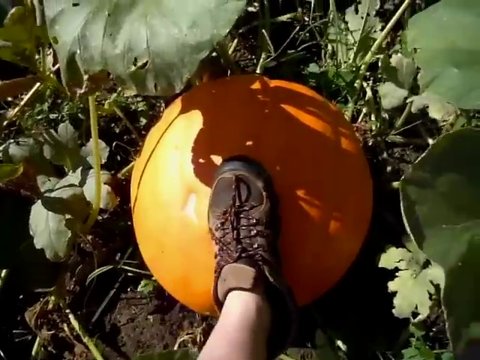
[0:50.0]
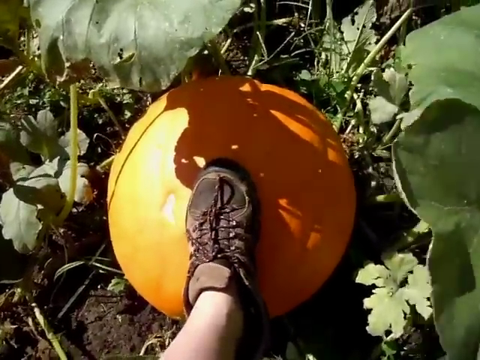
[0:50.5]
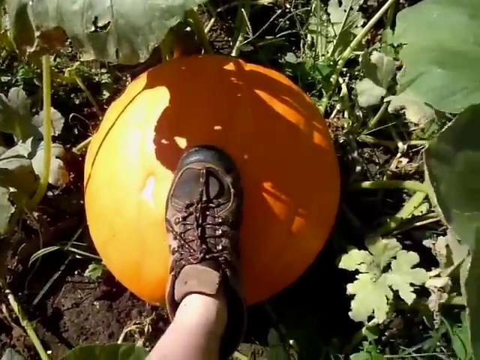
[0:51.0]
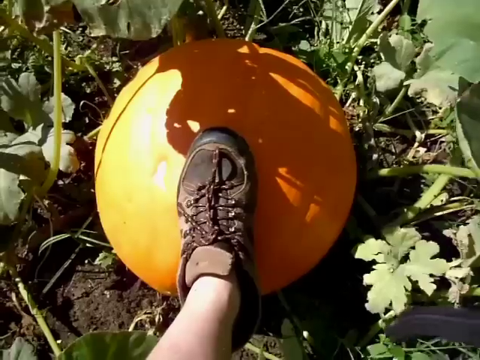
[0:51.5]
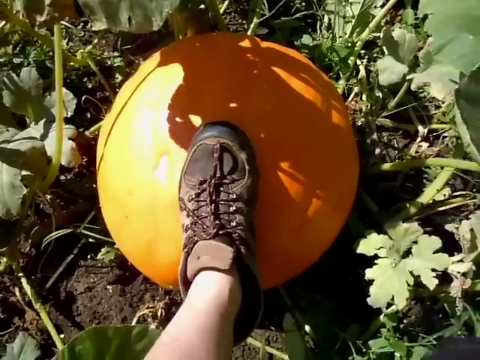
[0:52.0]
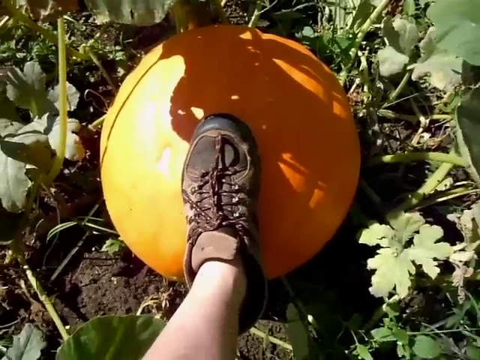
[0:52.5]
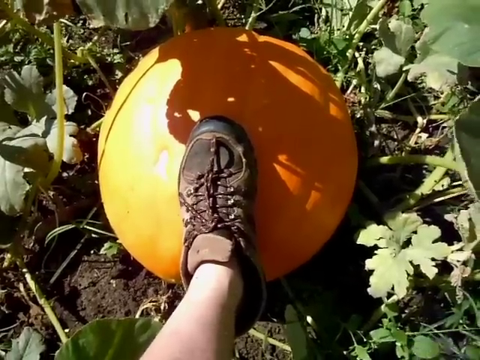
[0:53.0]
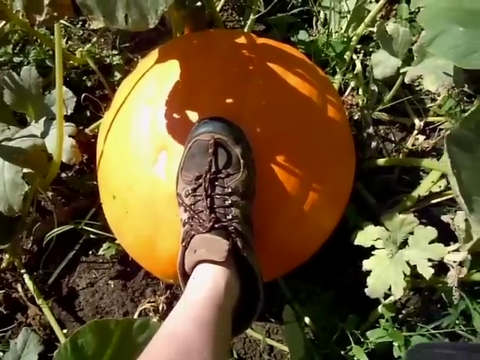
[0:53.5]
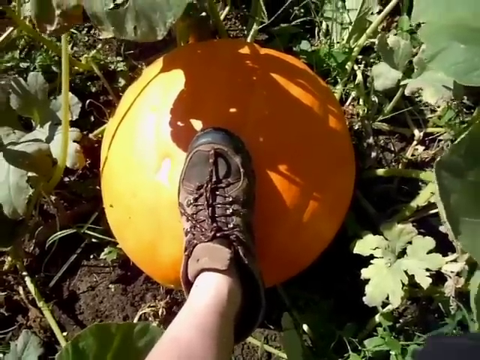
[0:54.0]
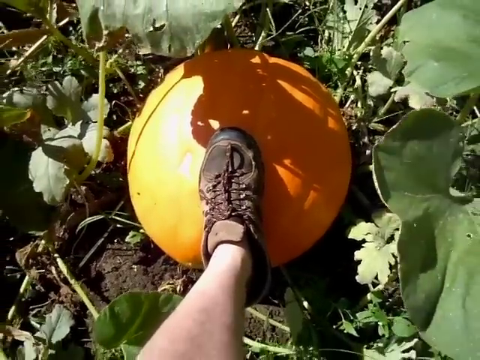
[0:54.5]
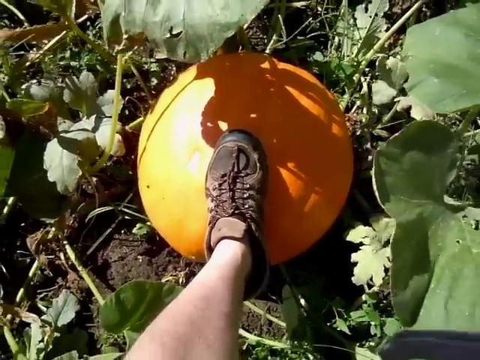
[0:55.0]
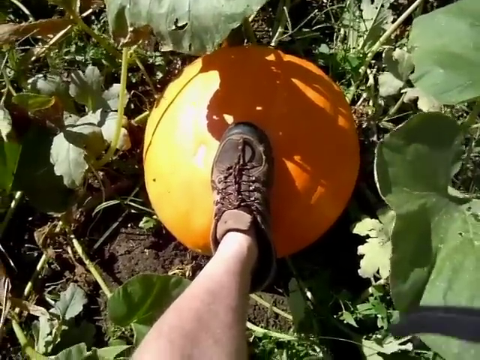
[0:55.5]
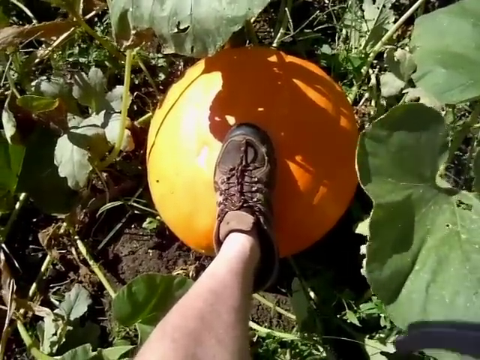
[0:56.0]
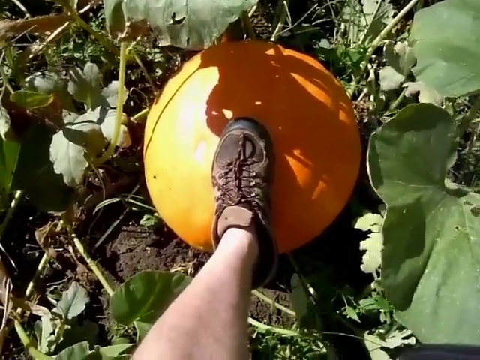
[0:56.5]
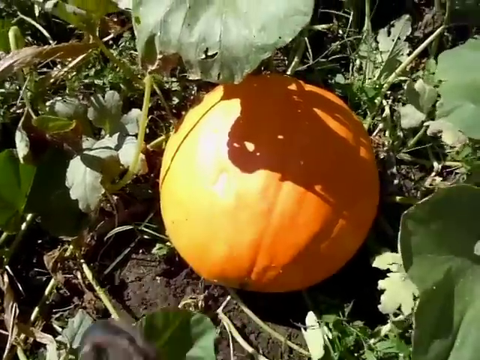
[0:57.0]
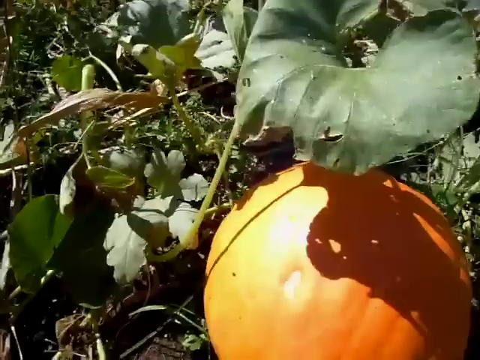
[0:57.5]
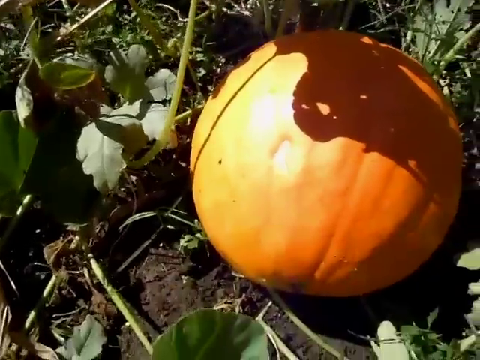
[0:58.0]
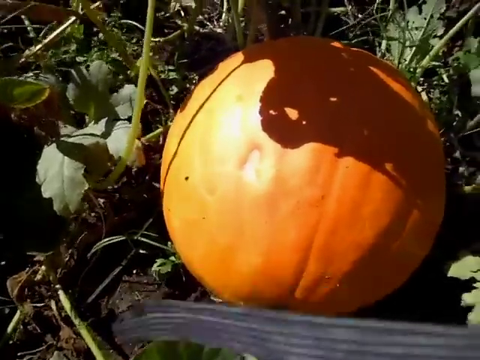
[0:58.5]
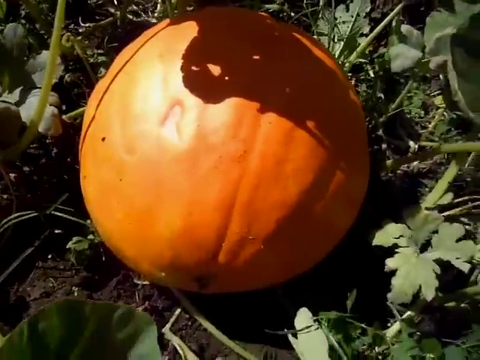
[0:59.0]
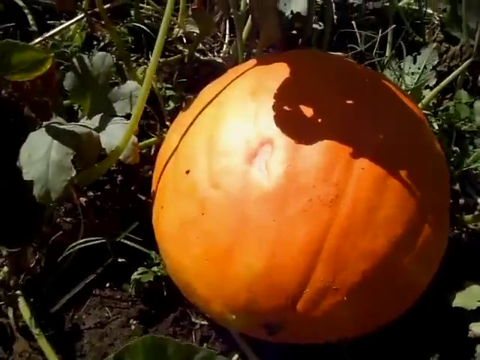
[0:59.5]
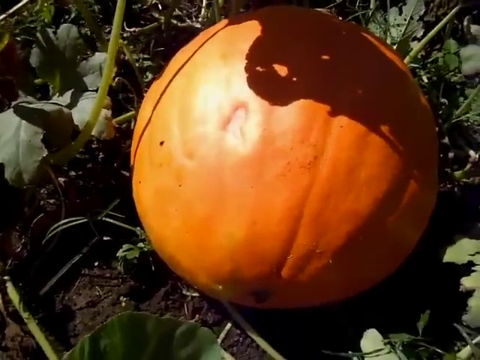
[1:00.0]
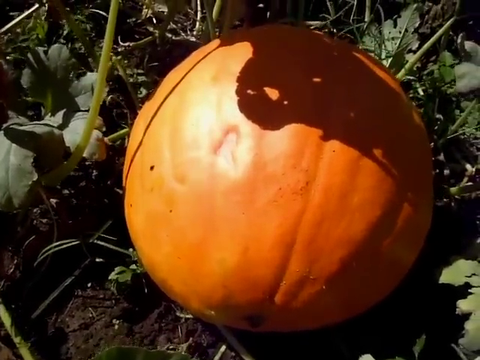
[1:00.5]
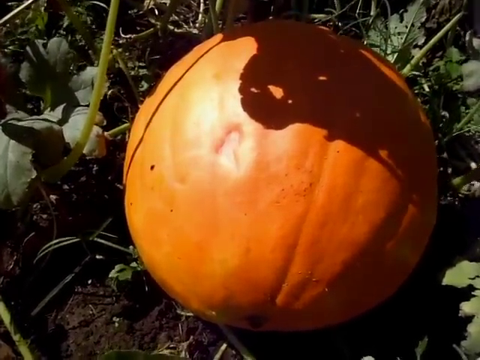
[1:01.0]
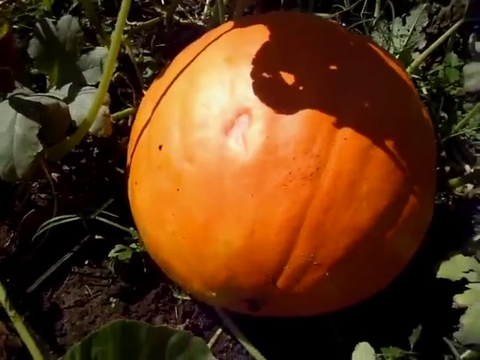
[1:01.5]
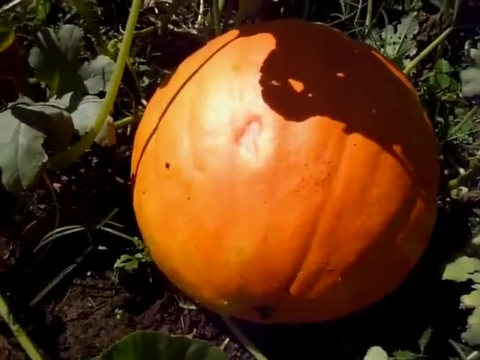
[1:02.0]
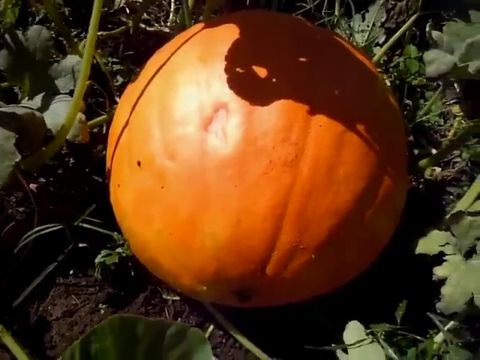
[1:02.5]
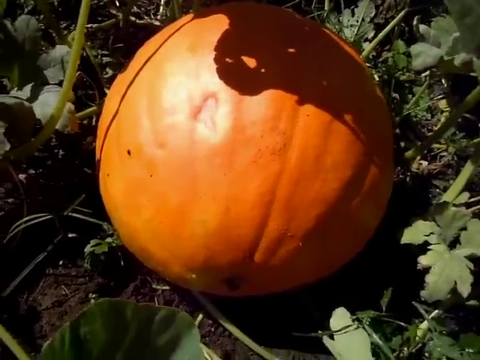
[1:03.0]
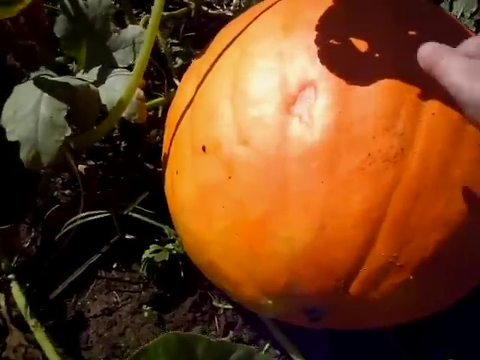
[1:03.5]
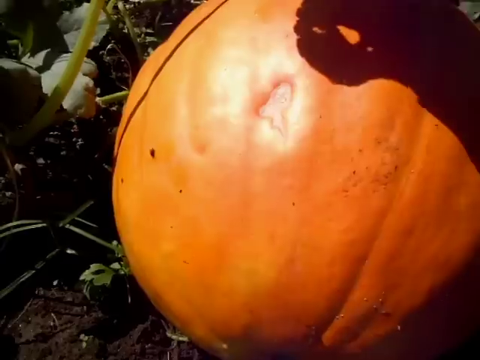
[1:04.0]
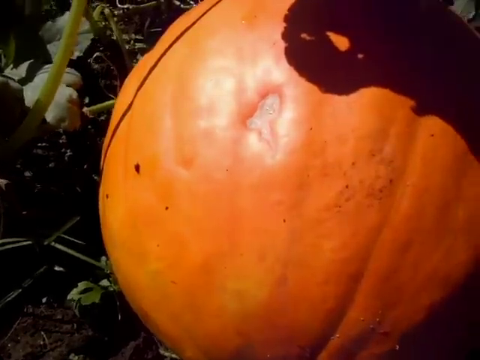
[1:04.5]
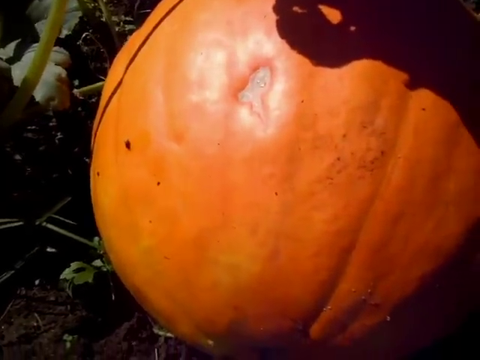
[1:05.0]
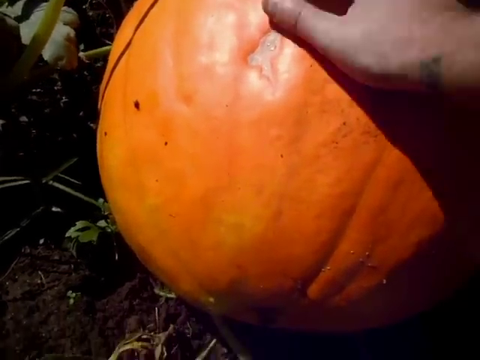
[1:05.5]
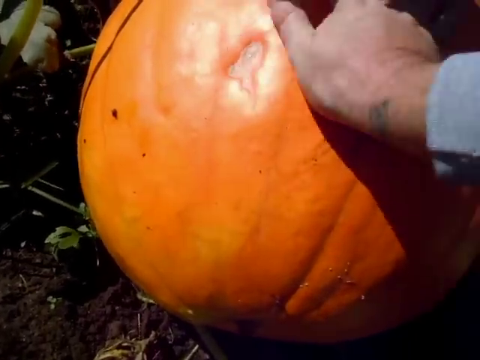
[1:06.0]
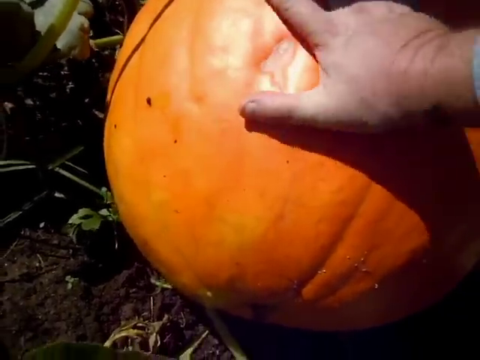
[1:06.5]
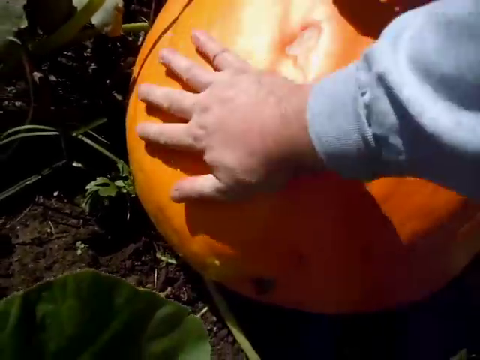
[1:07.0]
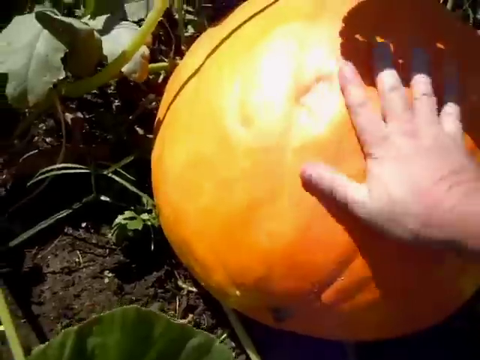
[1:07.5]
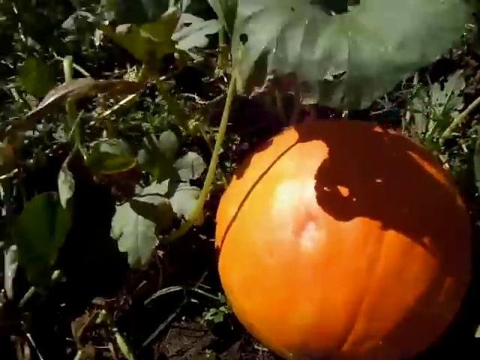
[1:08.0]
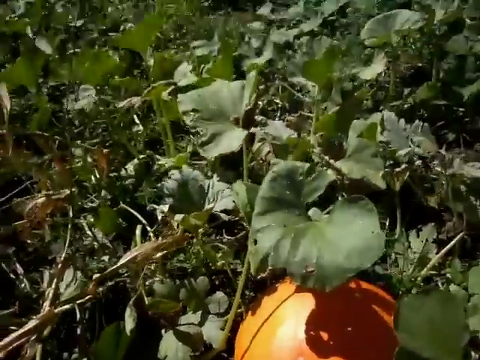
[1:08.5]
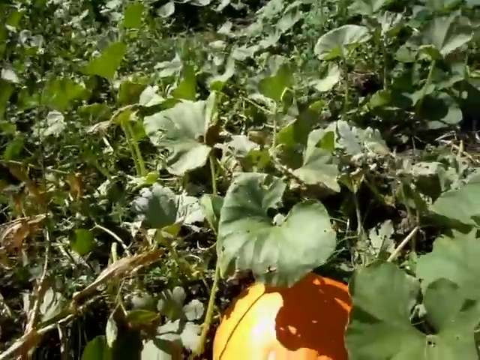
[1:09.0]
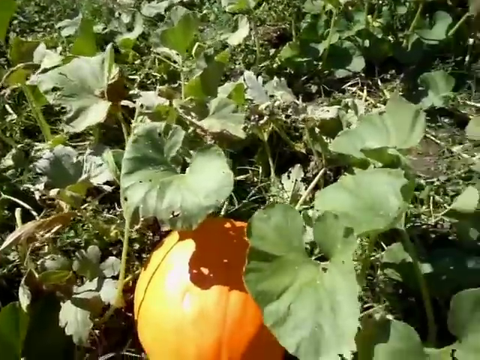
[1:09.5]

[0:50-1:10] A round pumpkin is centered on the screen, and someone has their left foot on top of it as if showing the scale. The foot is about half the length of the pumpkin's circumference, and they wear a brown and tan sneaker with brown and tan laces. Pumpkin vines surround the pumpkin; the stalks are tall and upright, and the vines are uniformly green and healthy looking. The camera moves closer to the pumpkin, and the person removes their left foot. The view zooms in toward the disfiguring mark on the pumpkin, which is lighter in color and sunken in. The person rubs their right thumb over the mark; they are wearing a long-sleeved blue shirt. The camera then pulls back and pans over the pumpkin vines that surround the pumpkin in the garden.